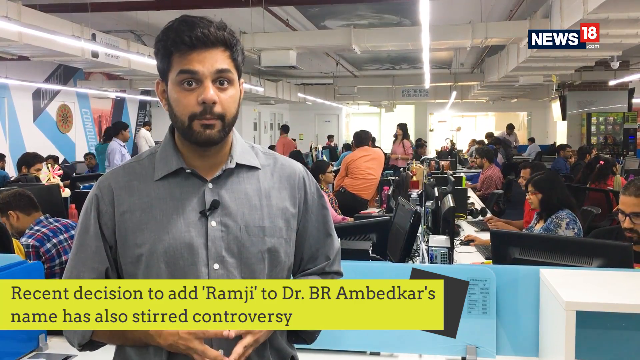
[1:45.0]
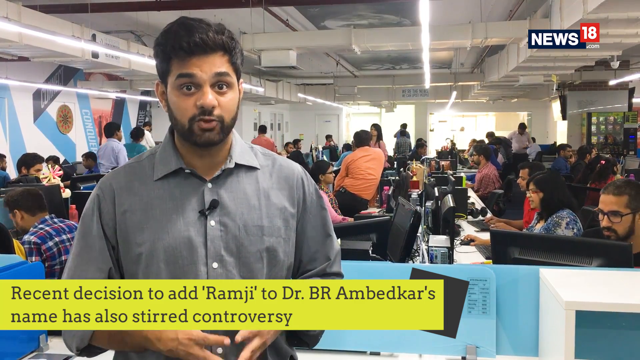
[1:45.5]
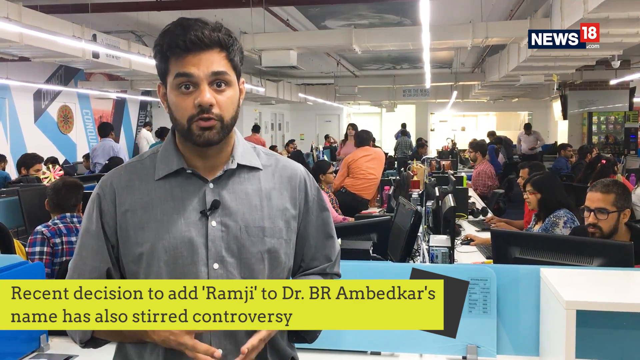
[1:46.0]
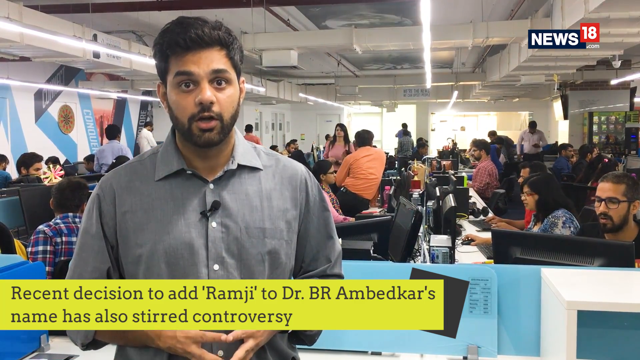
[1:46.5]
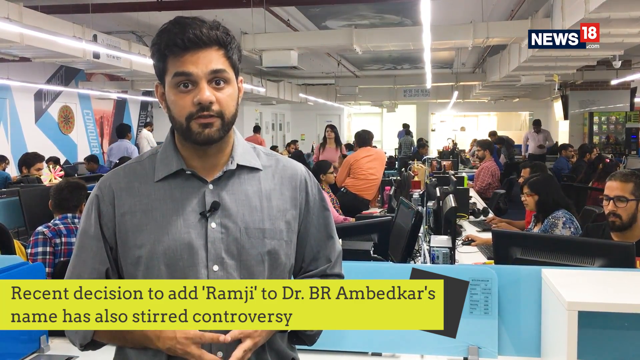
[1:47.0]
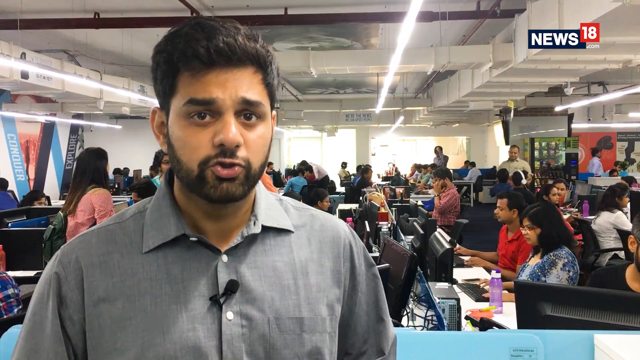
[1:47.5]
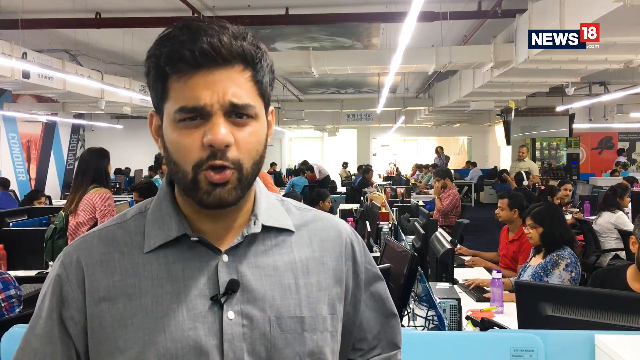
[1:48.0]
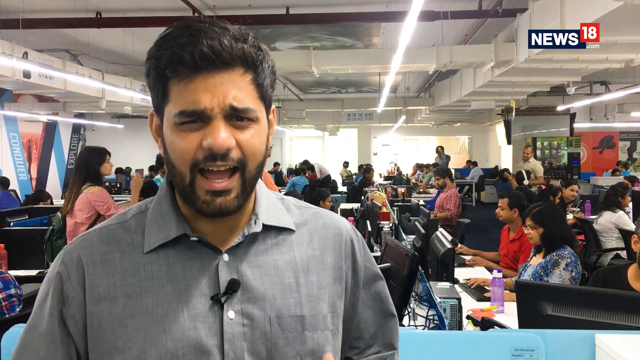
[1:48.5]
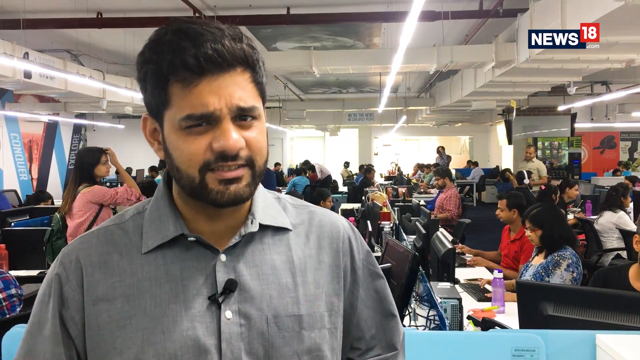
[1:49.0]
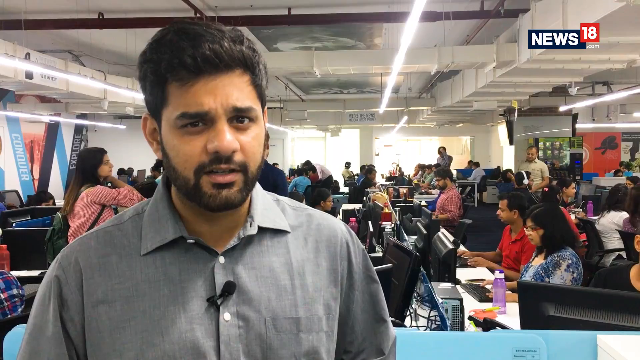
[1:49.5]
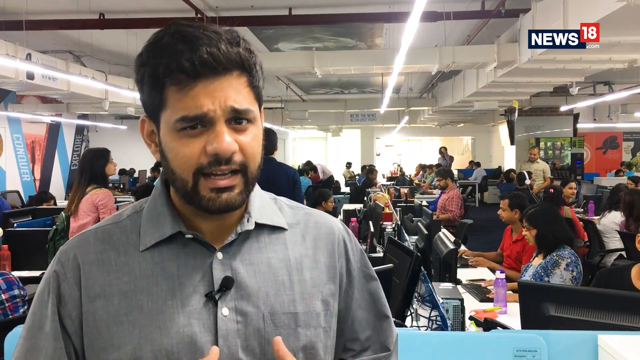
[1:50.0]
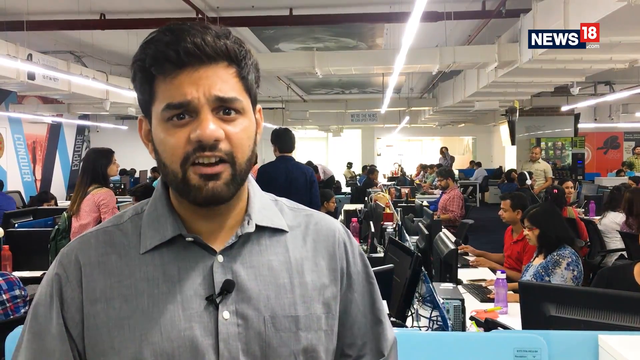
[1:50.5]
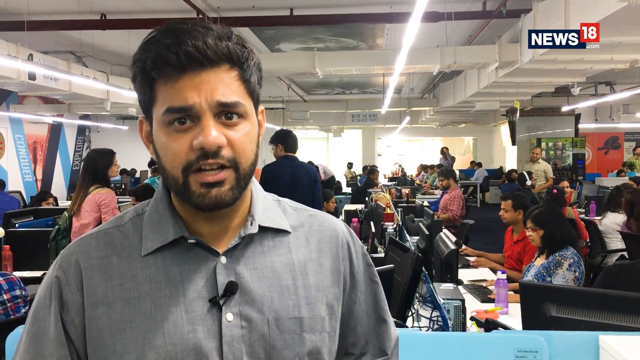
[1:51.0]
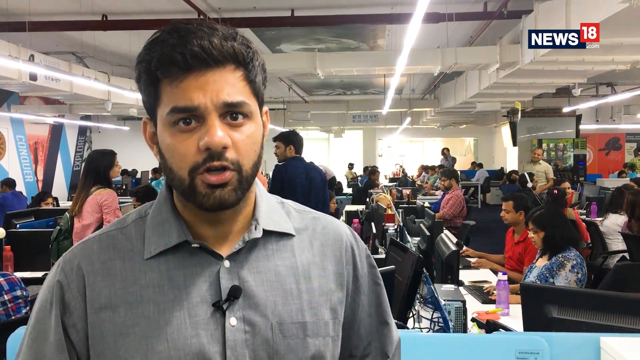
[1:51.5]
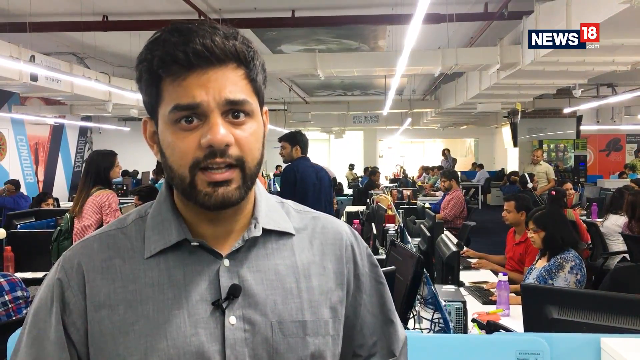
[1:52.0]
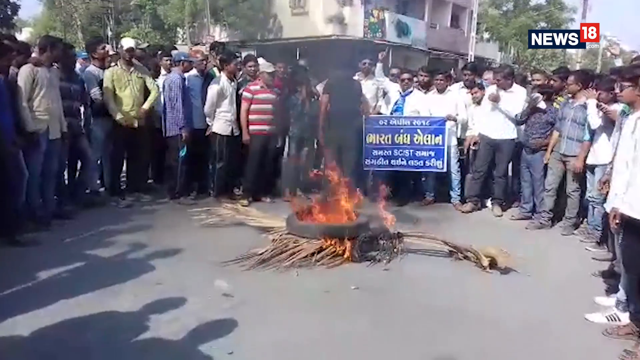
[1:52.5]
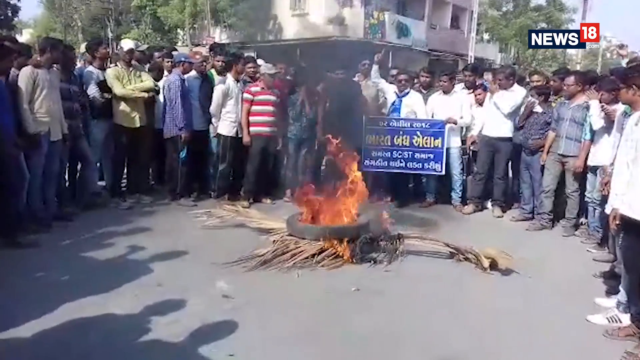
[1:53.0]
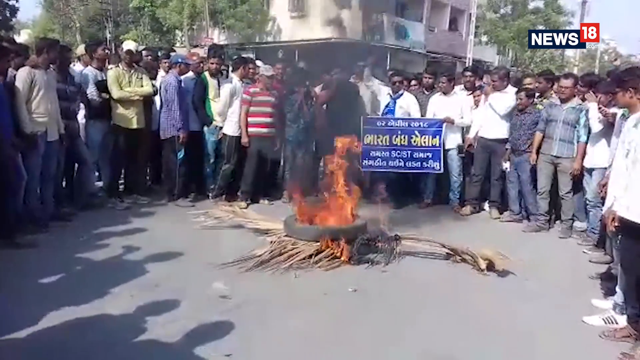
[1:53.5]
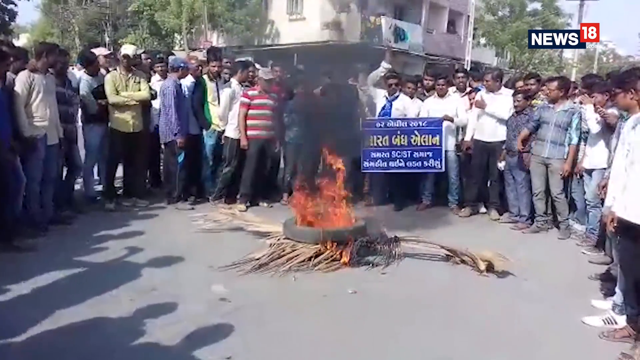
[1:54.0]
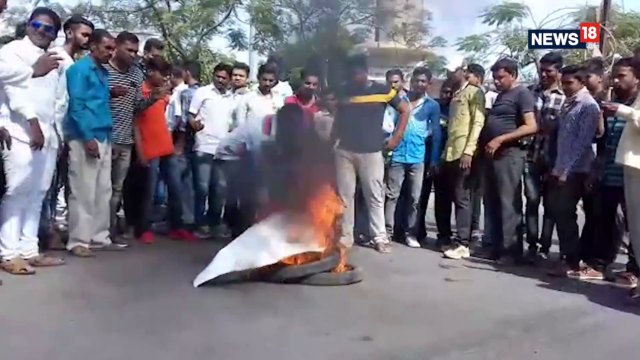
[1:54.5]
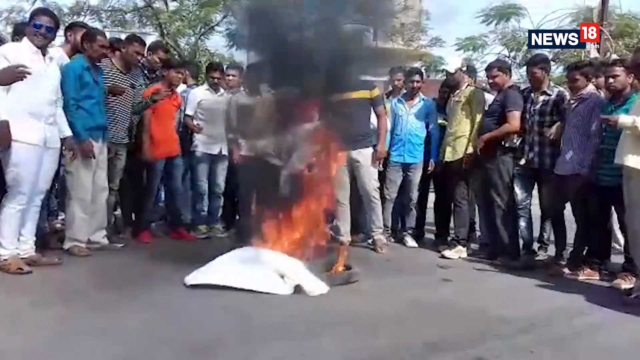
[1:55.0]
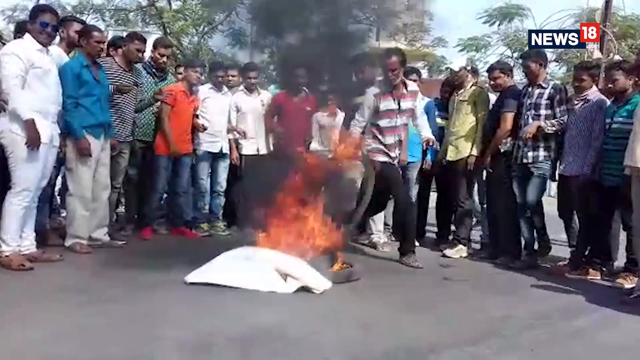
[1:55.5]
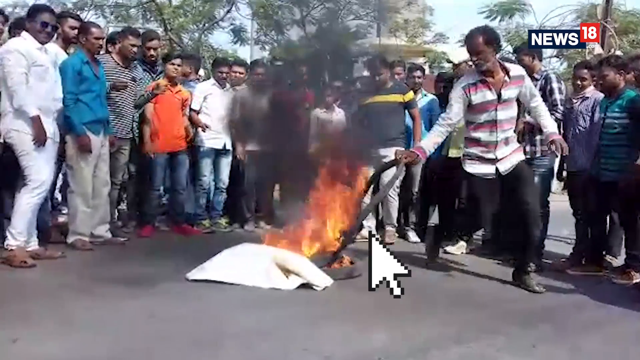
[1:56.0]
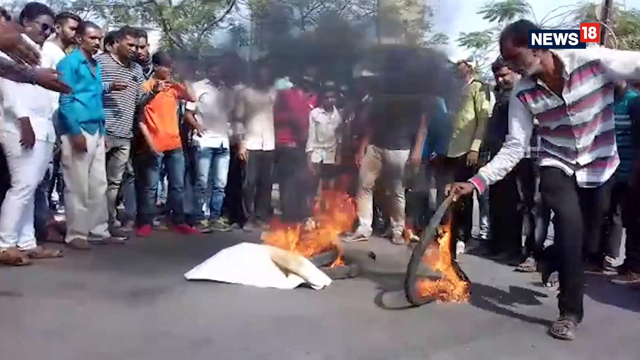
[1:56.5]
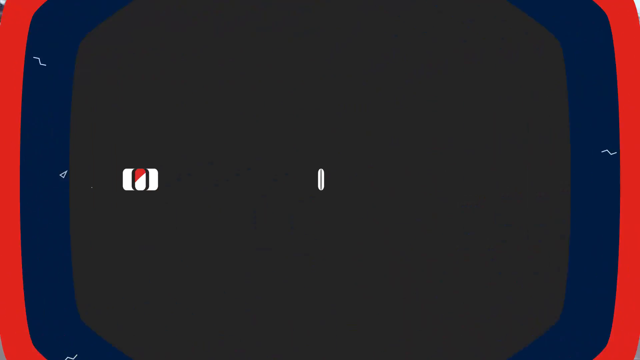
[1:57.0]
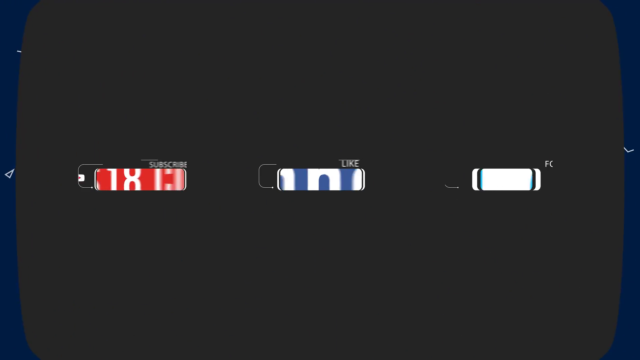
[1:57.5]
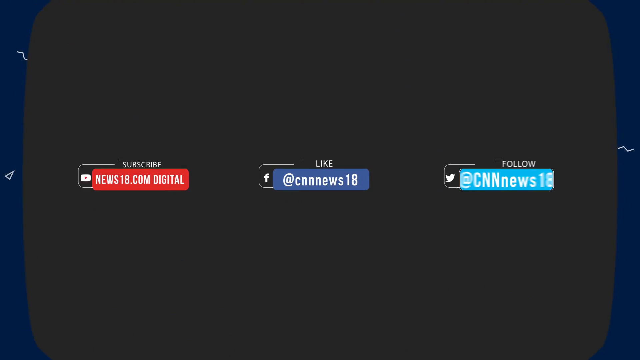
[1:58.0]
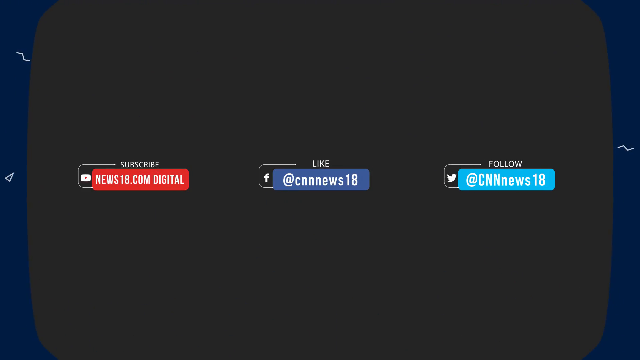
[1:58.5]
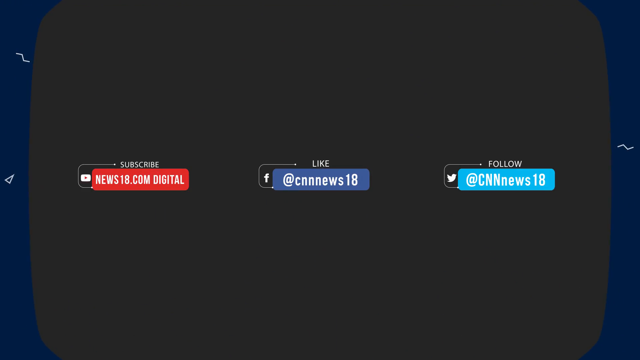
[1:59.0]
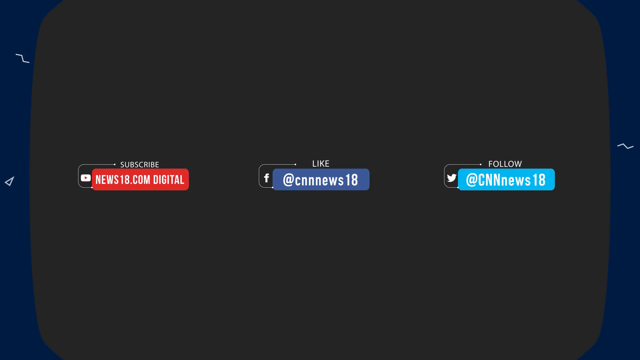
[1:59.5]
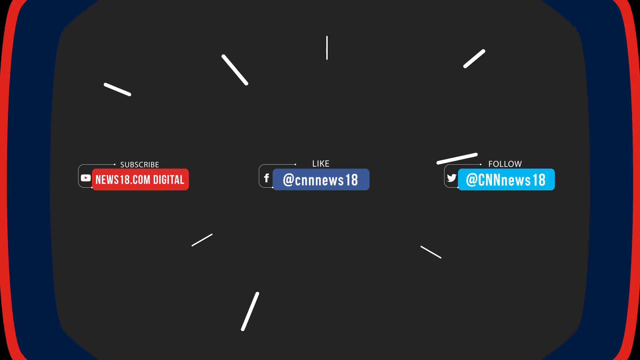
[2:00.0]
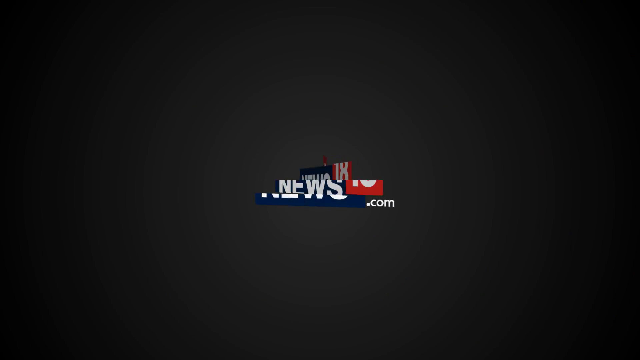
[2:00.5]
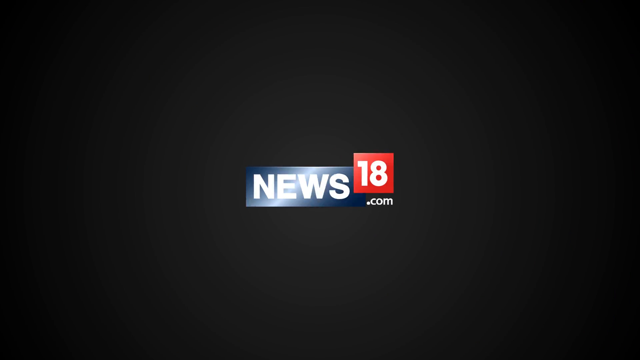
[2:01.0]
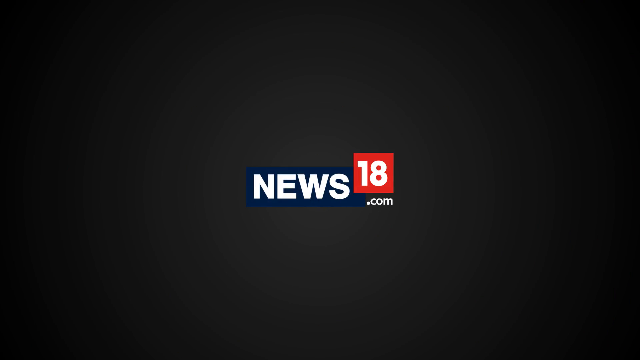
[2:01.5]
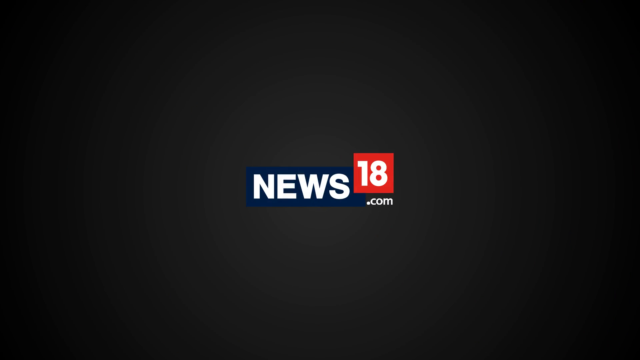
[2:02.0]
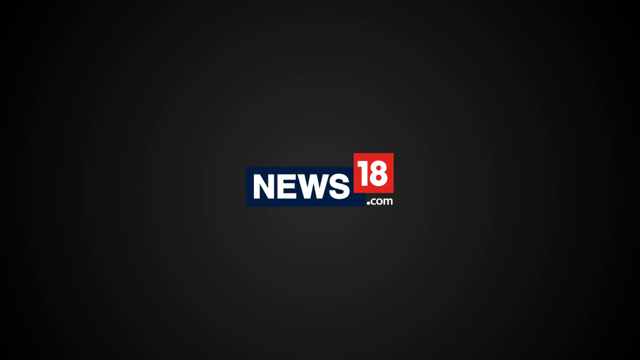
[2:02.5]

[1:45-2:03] The video, by News18, is about Bharat Bandh, Why Dalits Took to the Streets in Protest. It starts with a newscaster in the newsroom, then cars on fire, then a shot of five cars on fire, back to the newscaster, then a tire on fire and a windshield that has been smashed out. A text overlay reads "why are India's Dalits protesting" and "News18 explainer". After the newscaster, a building appears with March 20th over it; after that disappears, text reads "automatic arrests and registration of criminal complaints would not be allowed under the SC/ST Prevention of Atrocities Act, 1989", attributed to the Indian Supreme Court. Back with the newscaster, a text overlay reads "top court verdict aimed at preventing misuse of SC-ST Prevention of Atrocities Act, 1989". One of the government officials is shown with text reading "Modi government has filed a review petition against the Supreme Court verdict"; he appears to be an official with short white hair, a white beard and glasses, and two more shots show him talking with a finger up. Crowds, busted-out windshields, destroyed vehicles set on fire, and crowds marching and protesting follow. The newscaster appears again with text about resentment against Dalits building steadily over the last few years, then still shots of people with bats and of the military, a man holding a sign of another man over his head, and the statue with its head missing next to it on the ground, before a final return to the newscaster.